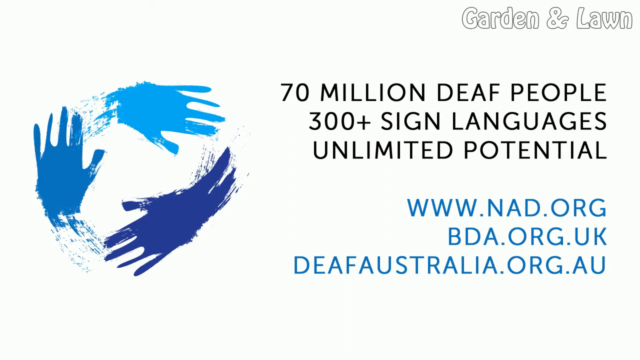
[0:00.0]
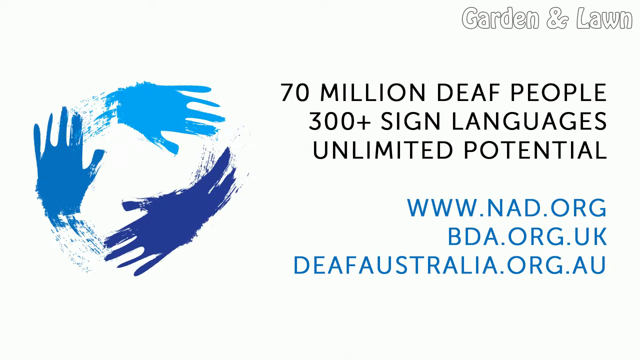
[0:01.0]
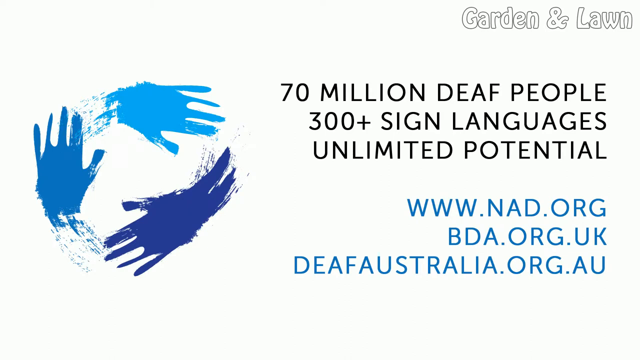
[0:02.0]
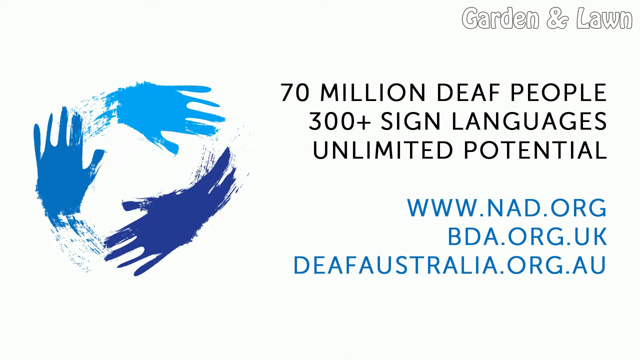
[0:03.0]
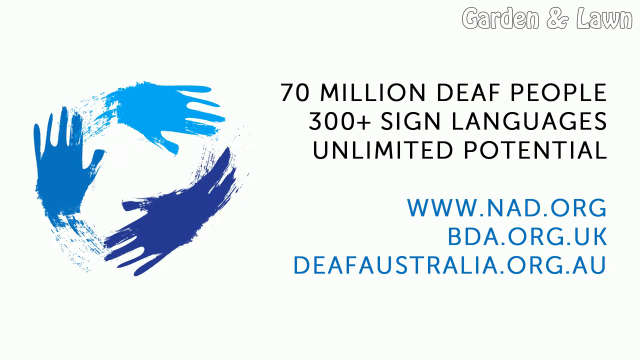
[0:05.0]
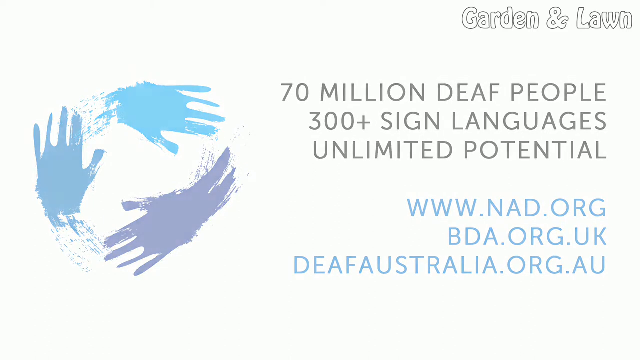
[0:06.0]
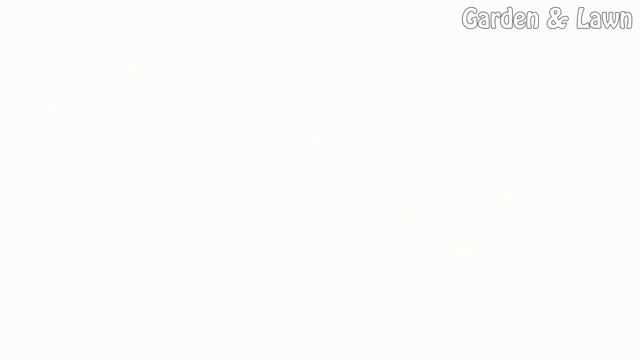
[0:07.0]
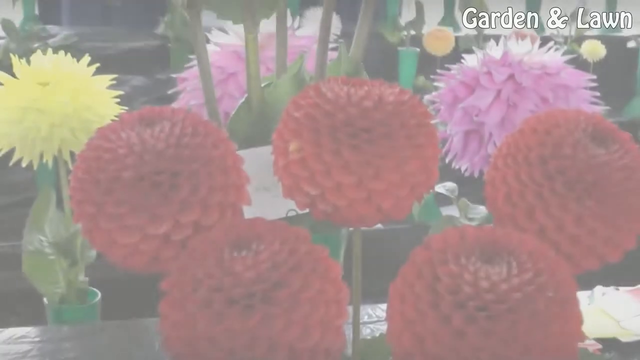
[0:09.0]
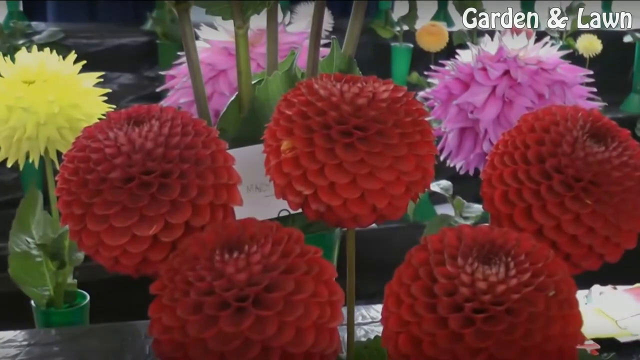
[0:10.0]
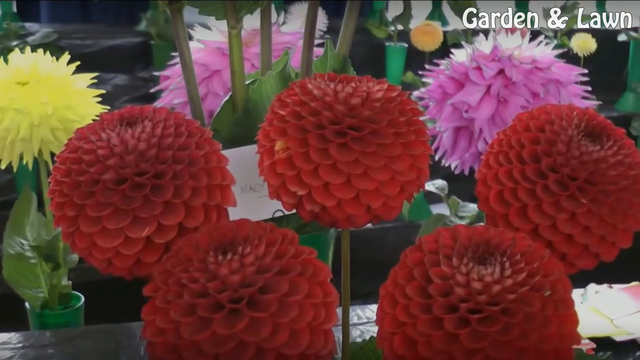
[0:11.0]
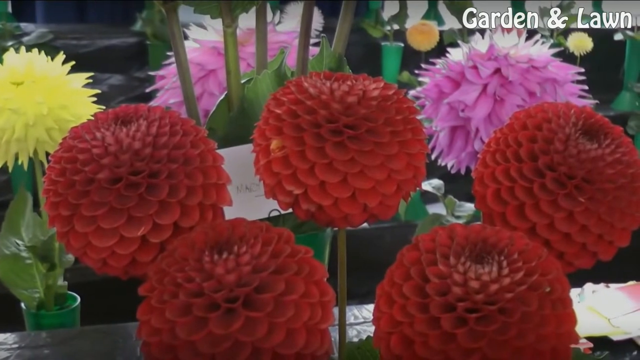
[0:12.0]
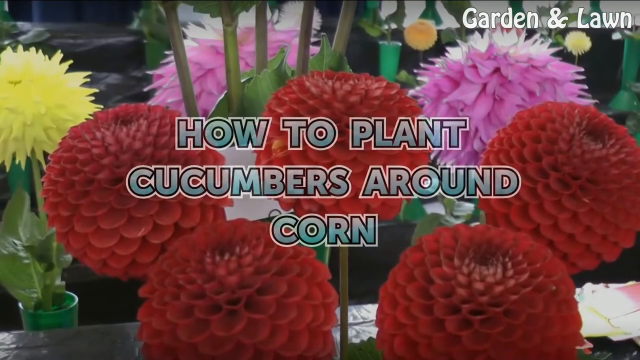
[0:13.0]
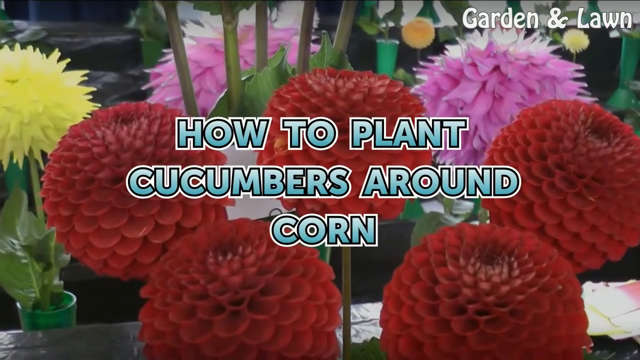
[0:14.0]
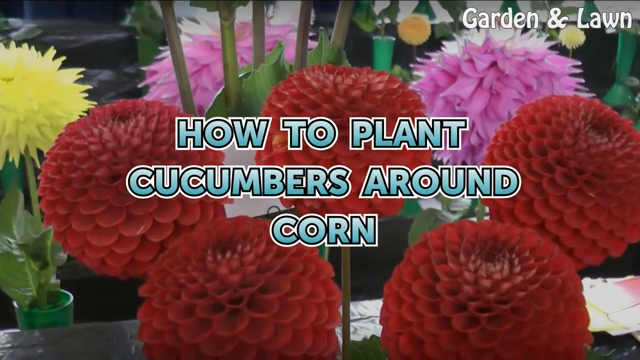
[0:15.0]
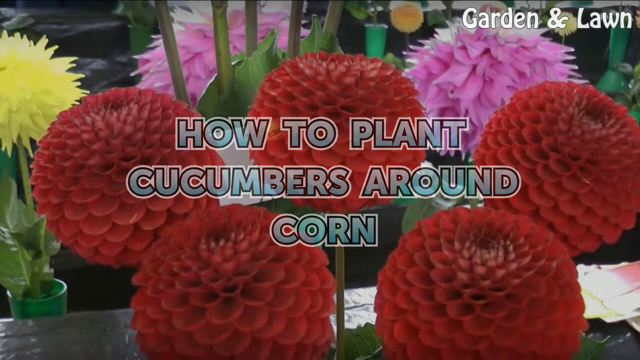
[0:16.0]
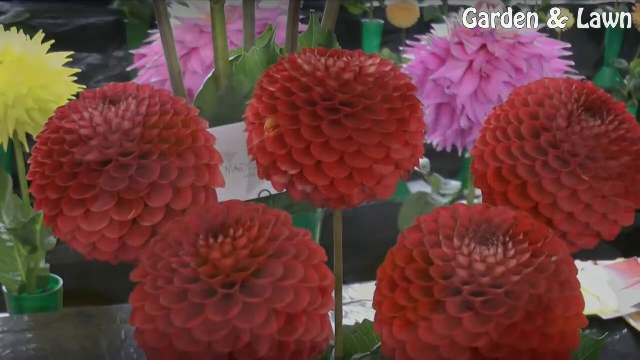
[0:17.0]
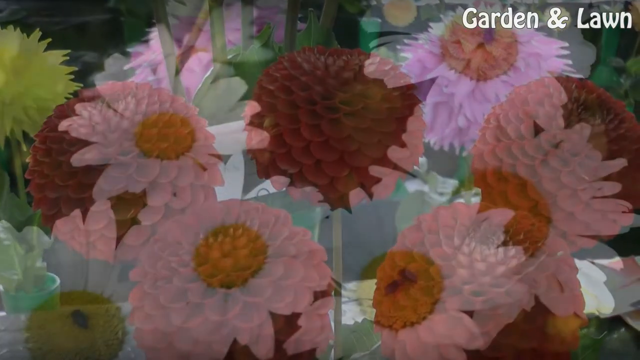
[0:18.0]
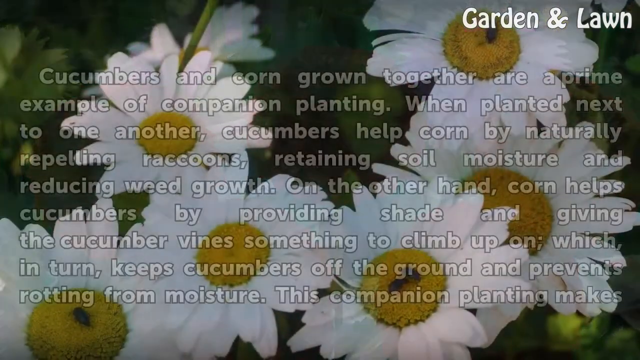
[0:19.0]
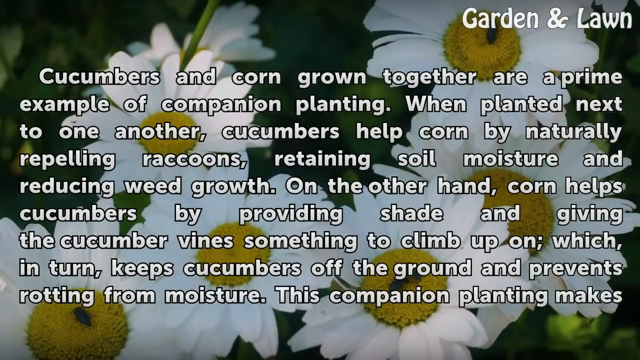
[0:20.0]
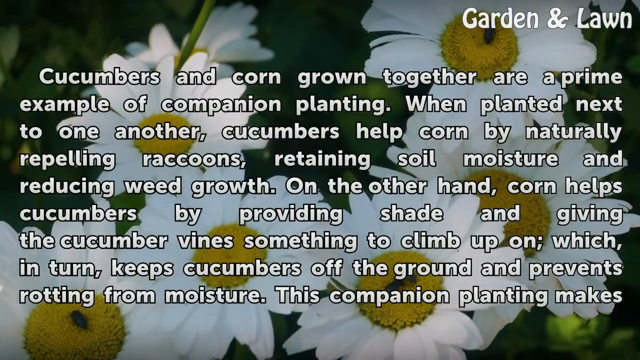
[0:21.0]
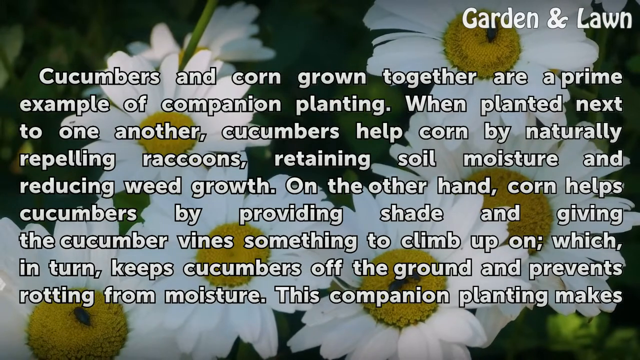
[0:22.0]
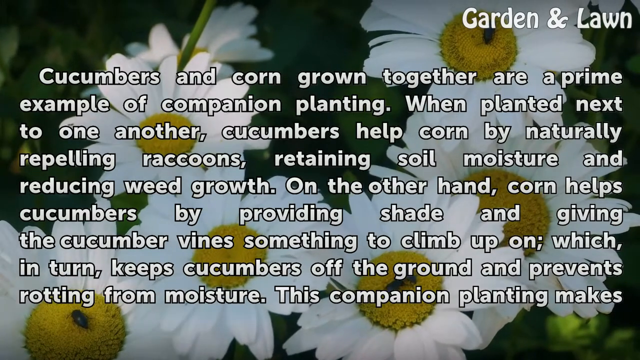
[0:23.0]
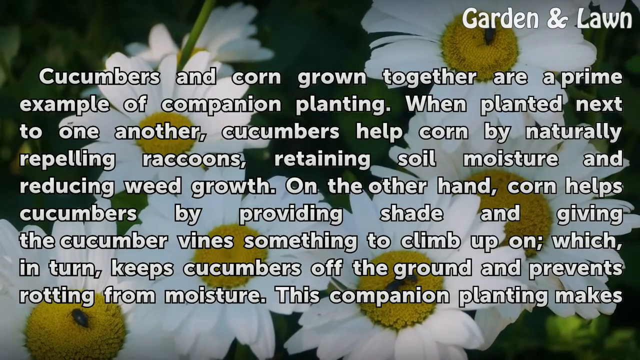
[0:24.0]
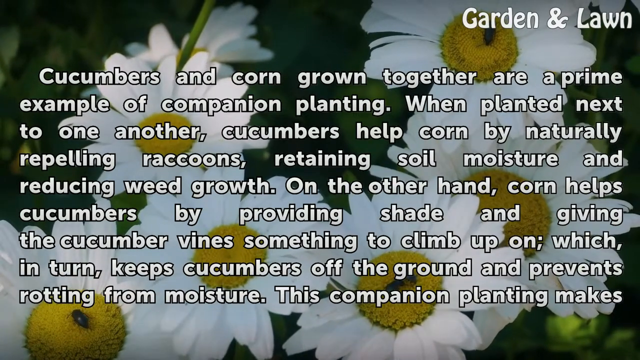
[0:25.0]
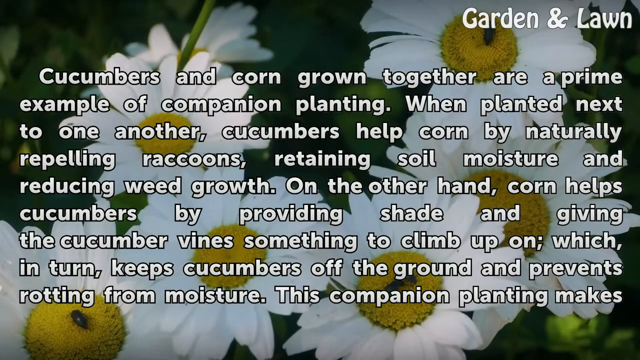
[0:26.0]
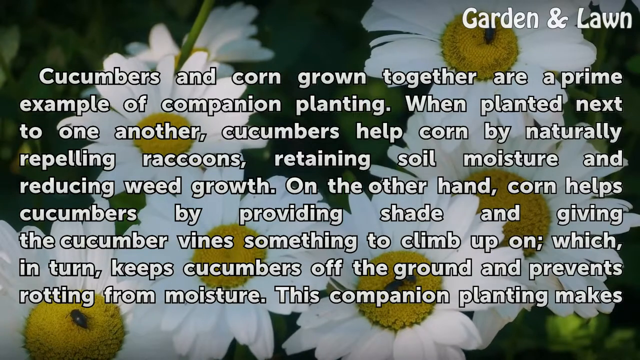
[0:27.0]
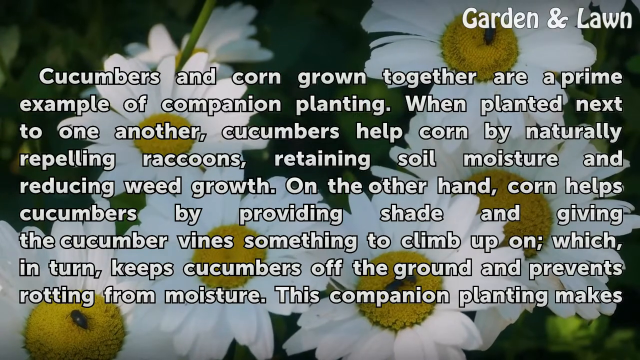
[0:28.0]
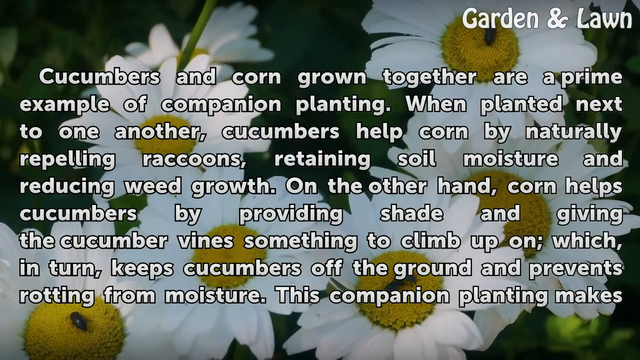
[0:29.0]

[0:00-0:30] Against a background, the label "garden and lawn" is in the upper right-hand corner, with a logo to the left showing three handprints in different shades of blue. To the right of this is text reading "70 million deaf people 300 plus sign languages unlimited potential" along with "the NAD the BDA and deafaustralia.org". After a brief delay, the screen fades to white and then fades back to an array of pom-pom dahlias. "How to plant cucumbers around corn" fades in as blue text with a black outline in the center of the screen. This text fades away too, and the scene switches to a large cluster of daisies in the background. Next, a wall of white text with a black outline appears, reading "Cucumbers and corn grown together are a prime example of companion planting. When planted next to one another, cucumbers help corn by naturally repelling raccoons, retaining soil, and reducing weed growth. On the other hand, corn helps cucumbers by providing shade and giving the cucumber vines something to climb up on, which in turn keeps cucumbers off the ground and prevents rotting from moisture. This companion plant makes".